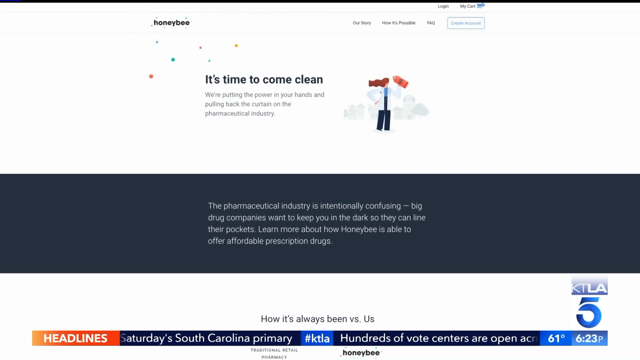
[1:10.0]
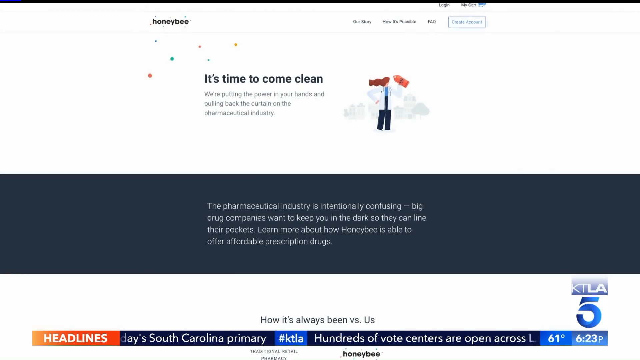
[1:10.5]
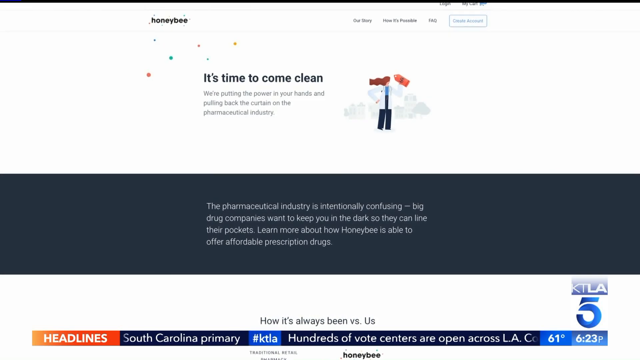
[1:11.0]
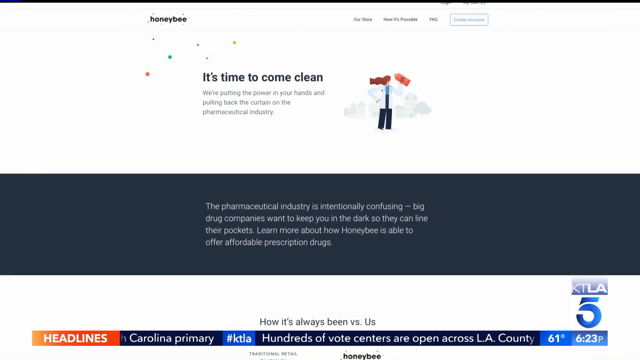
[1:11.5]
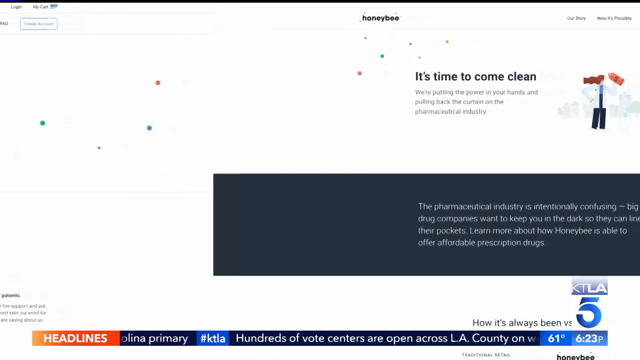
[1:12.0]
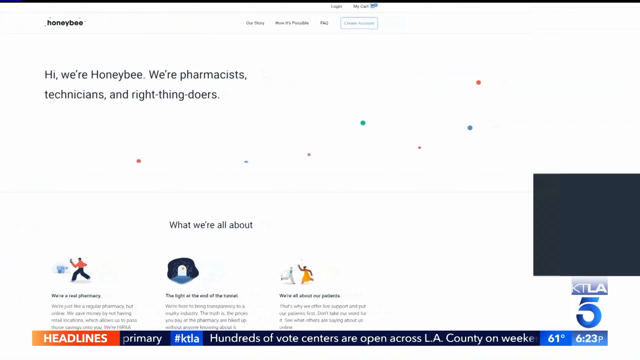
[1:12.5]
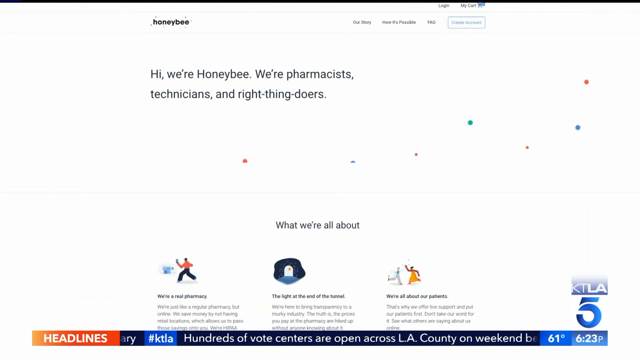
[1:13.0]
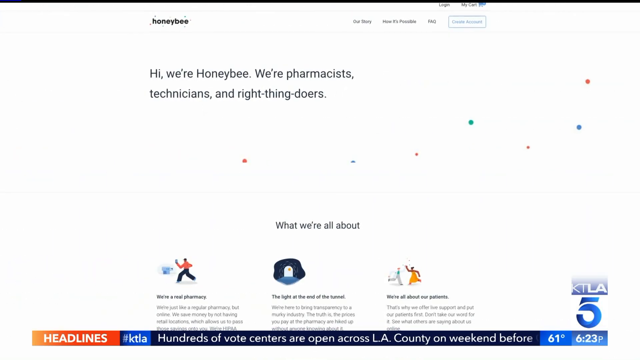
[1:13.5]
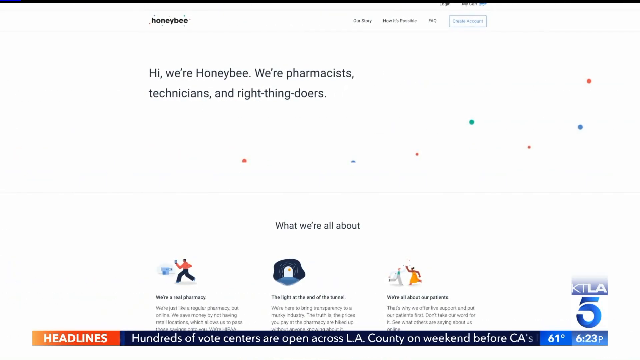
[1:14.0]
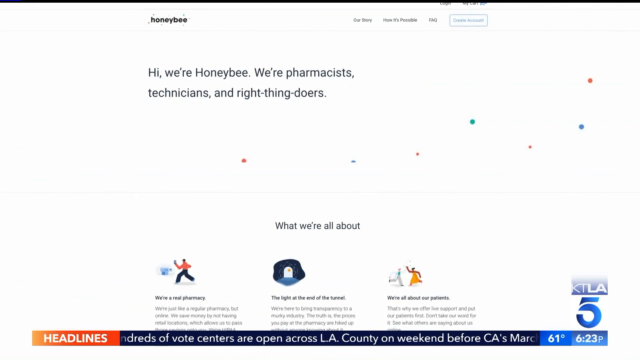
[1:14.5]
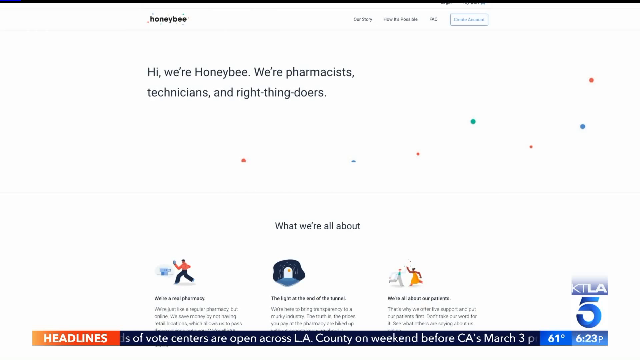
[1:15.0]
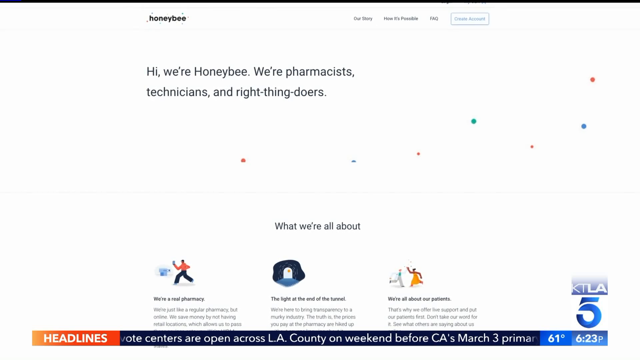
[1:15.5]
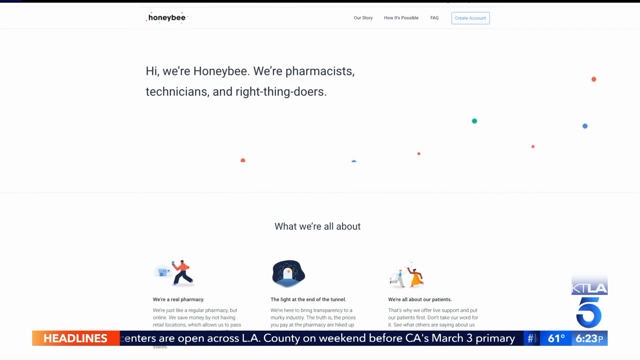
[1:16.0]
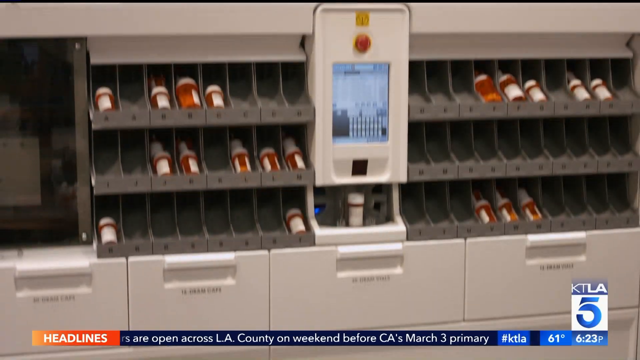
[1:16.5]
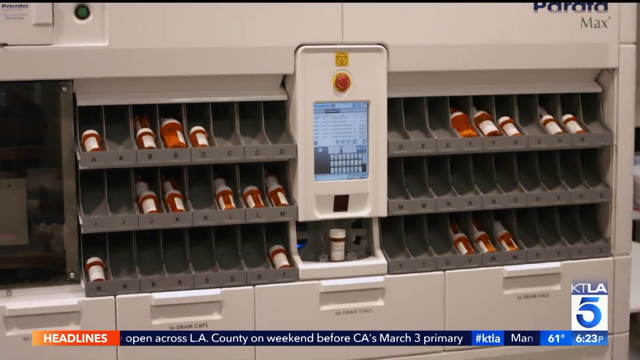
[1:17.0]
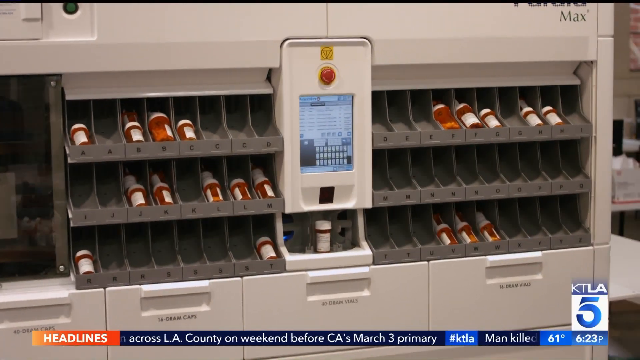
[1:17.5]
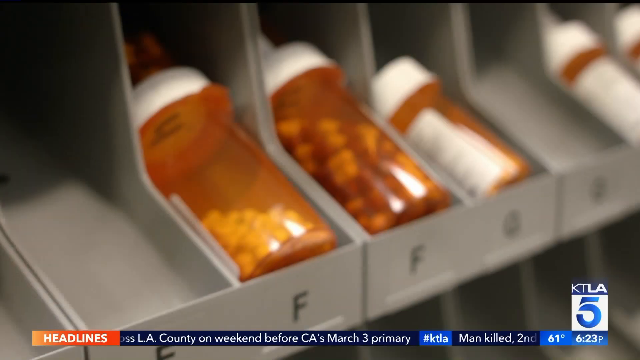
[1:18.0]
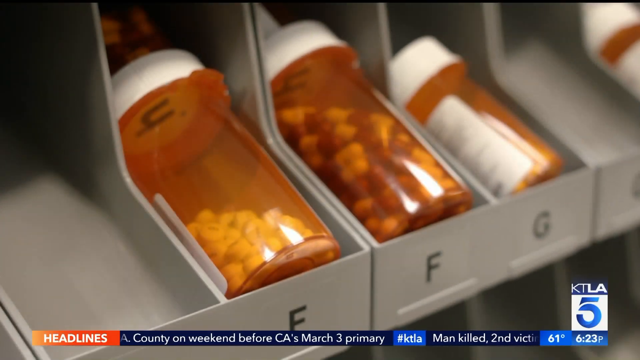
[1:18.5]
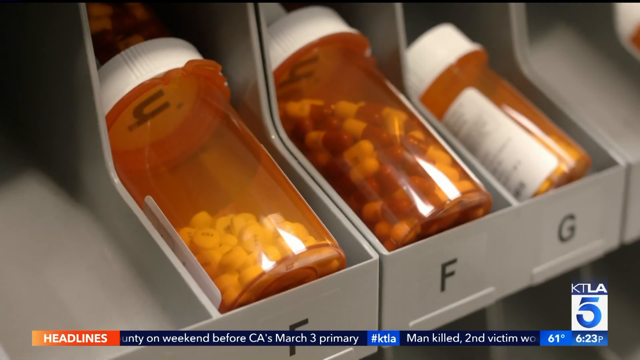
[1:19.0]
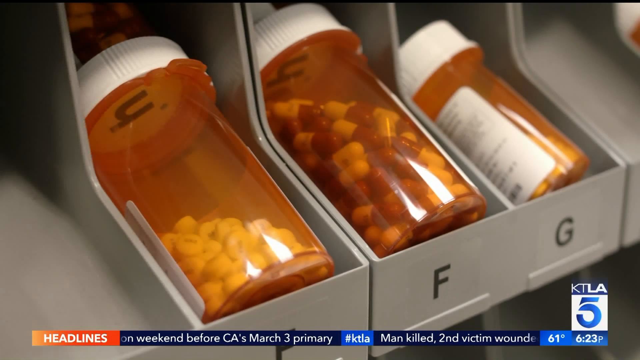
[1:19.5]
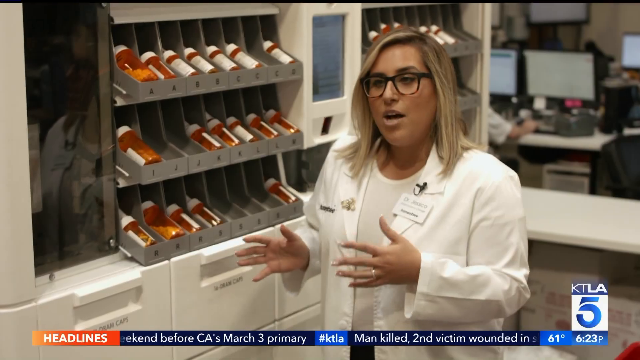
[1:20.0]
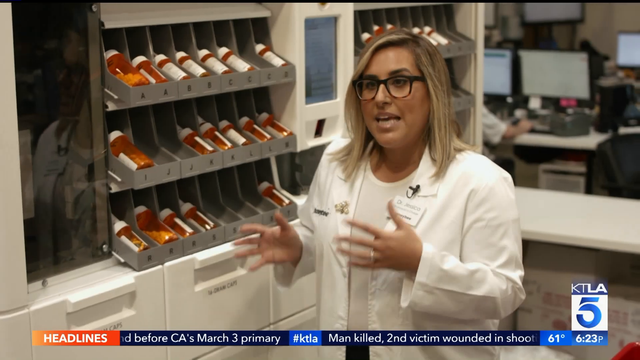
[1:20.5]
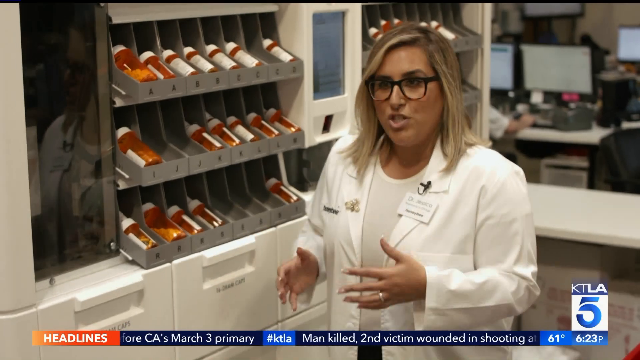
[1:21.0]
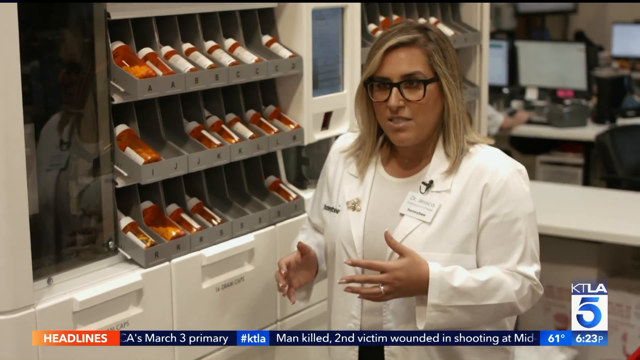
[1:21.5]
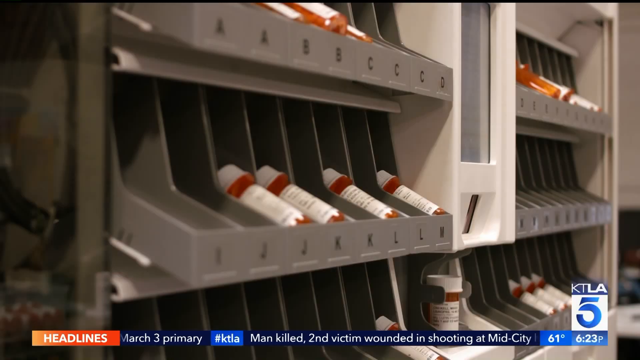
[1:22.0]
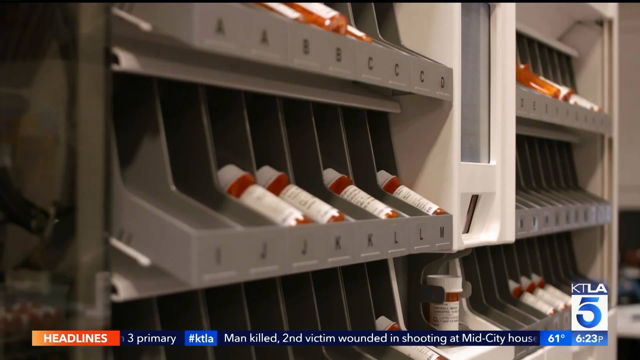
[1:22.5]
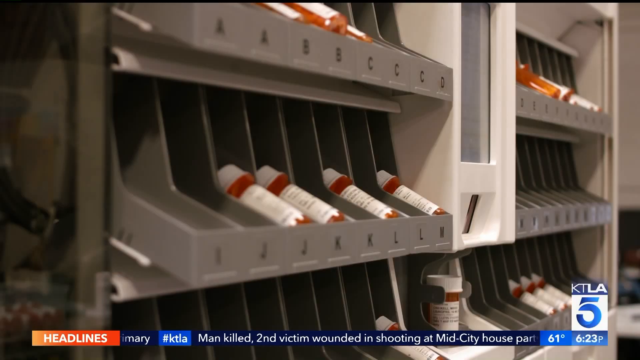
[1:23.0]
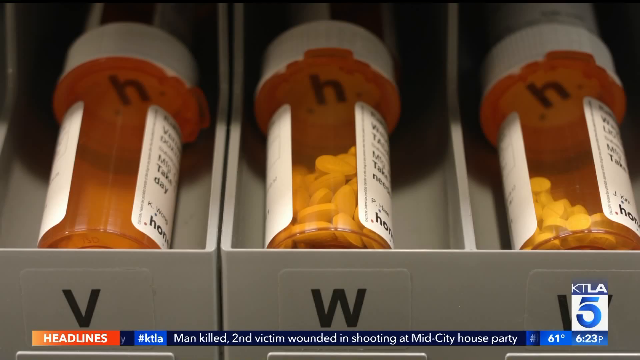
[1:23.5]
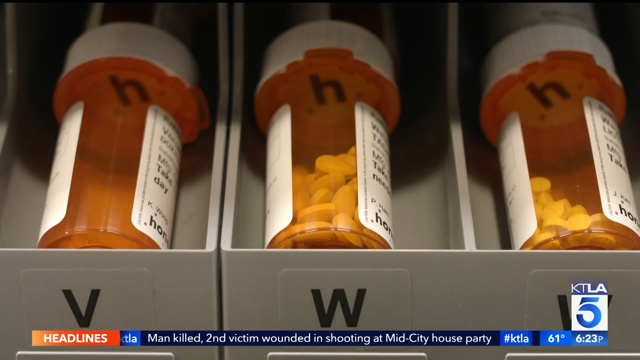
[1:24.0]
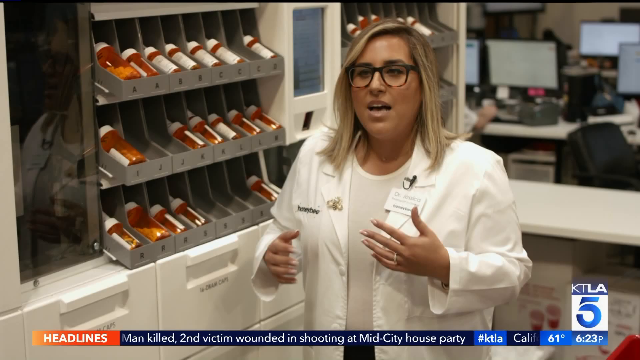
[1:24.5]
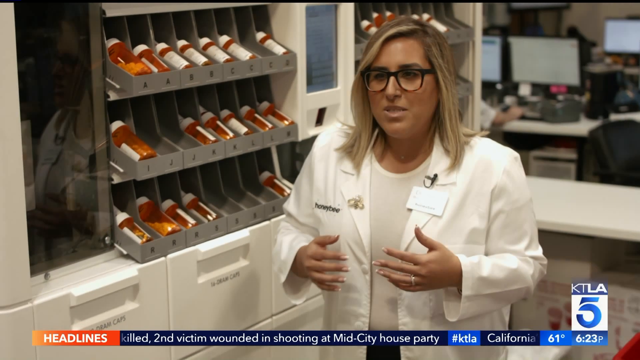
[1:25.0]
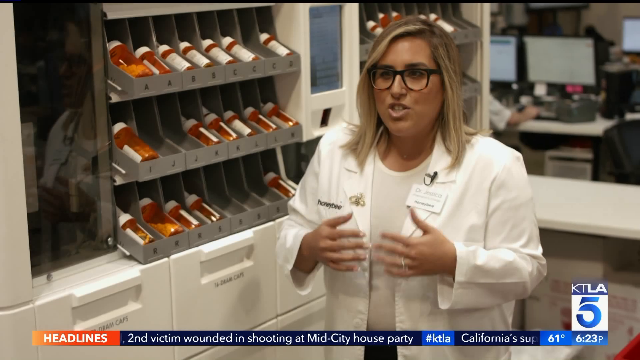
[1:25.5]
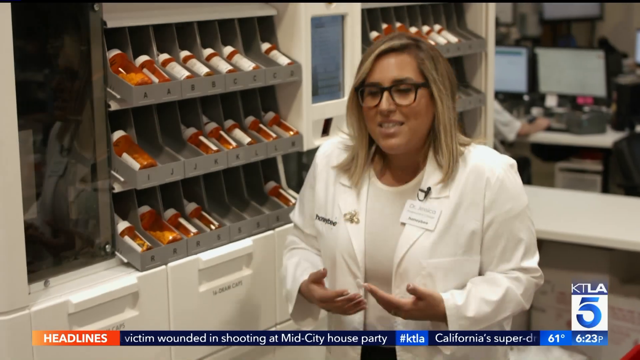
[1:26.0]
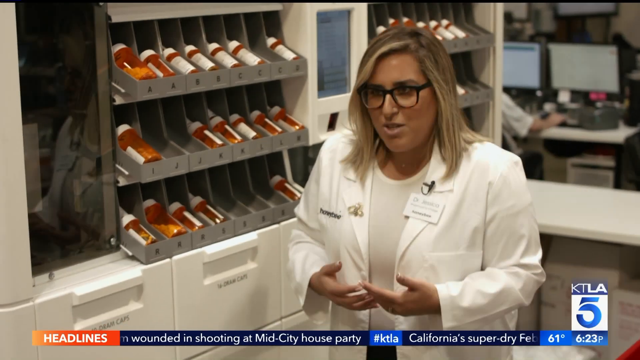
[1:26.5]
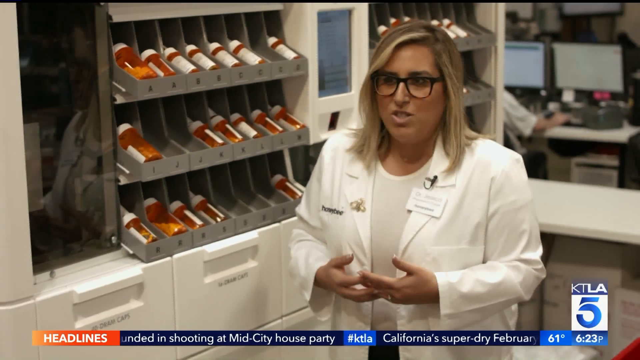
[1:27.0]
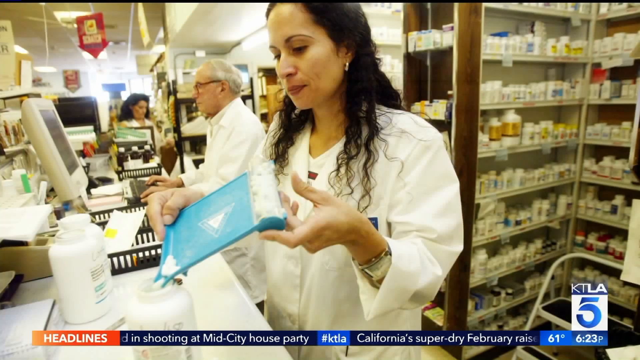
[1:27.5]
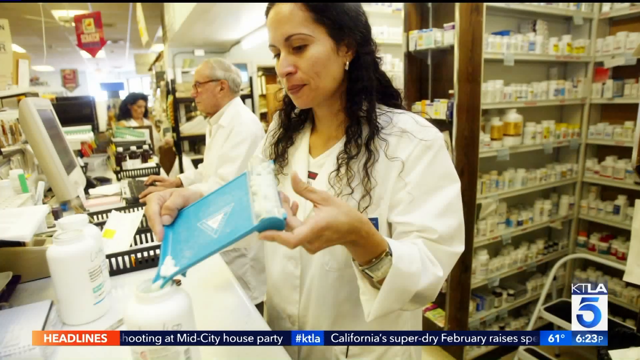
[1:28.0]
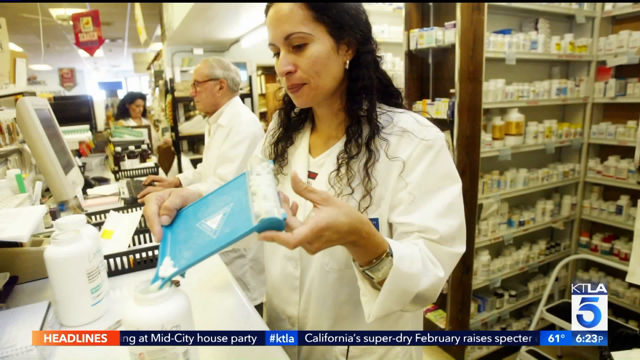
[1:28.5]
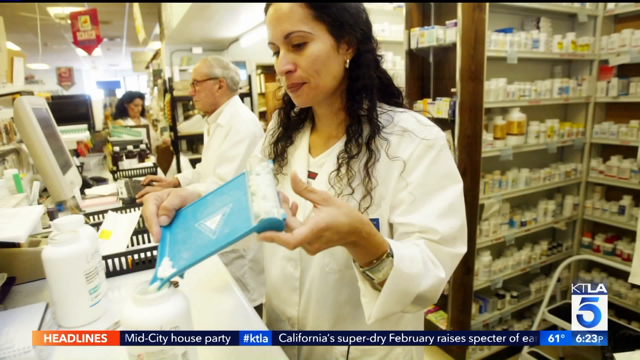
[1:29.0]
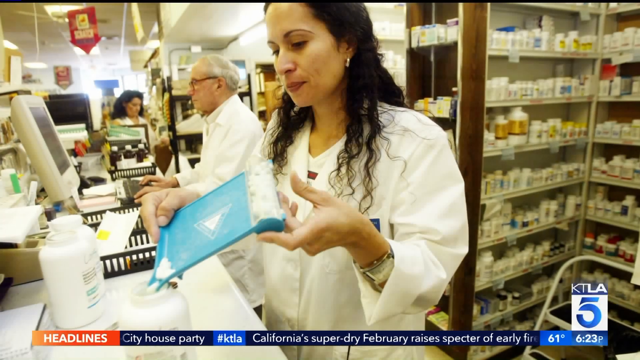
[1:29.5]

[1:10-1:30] A screenshot of the Honeybee website reads "it's time to come clean. We're putting the power in your hands and pulling back the curtain on pharmaceutical industry. The pharmaceutical industry is intentionally confusing", and lower on the page "Learn more about how Honeybee is able to offer affordable prescription" and "how it's always been versus us". The screen changes to one reading "hi, we're Honeybee. We're pharmacists, technicians, and right thing doers." A navigation bar at the top reads "our story", "how it's possible" and "FAQs", and a section reads "what we're all about" with three subcategories at the bottom of the screen. A wider view of the pharmacy shows pills kept in lettered slots, A, B, C, D and so on; two amber bottles with white tops lie on their sides in spots F and G. The camera zooms in on them a little, then out to show the pharmacist standing next to it, talking.